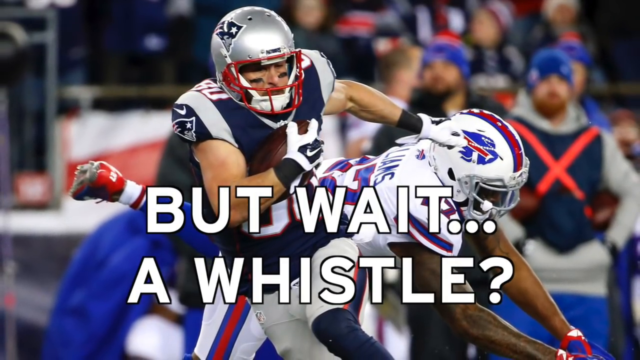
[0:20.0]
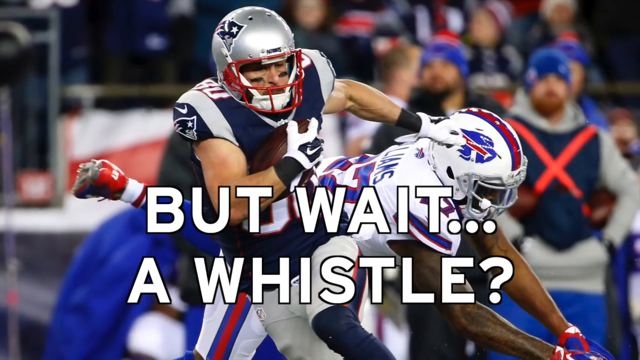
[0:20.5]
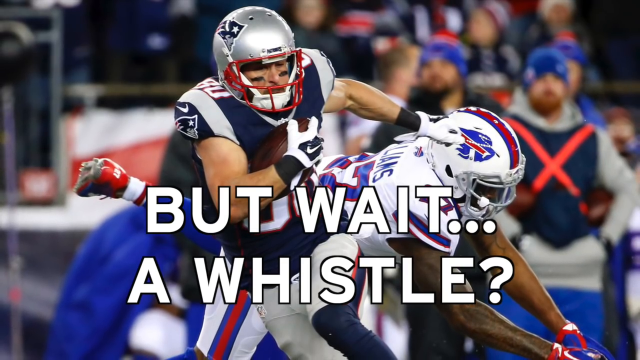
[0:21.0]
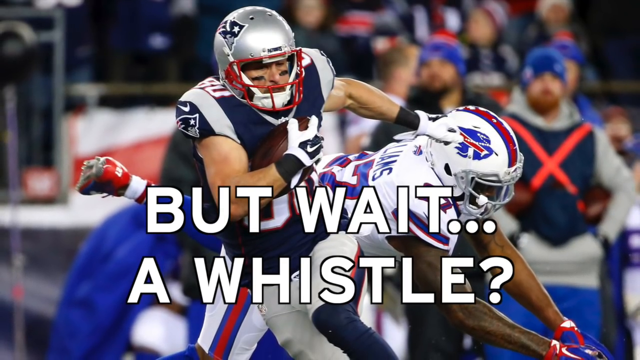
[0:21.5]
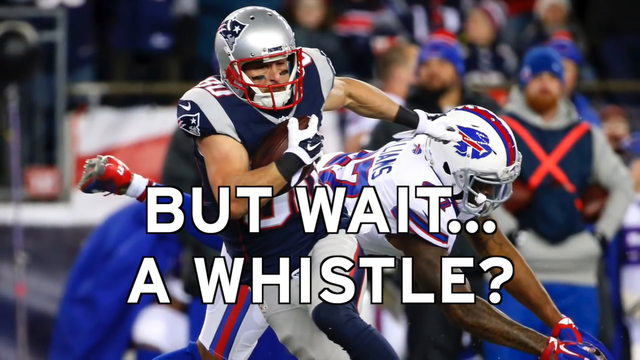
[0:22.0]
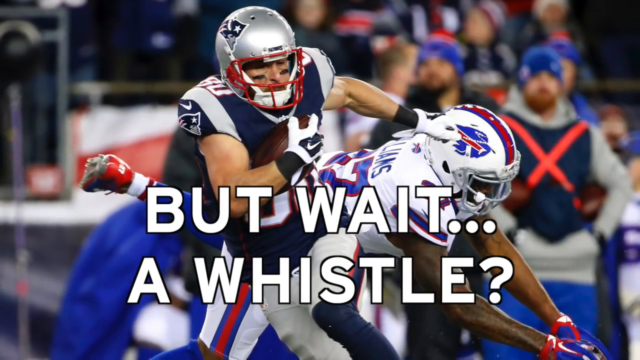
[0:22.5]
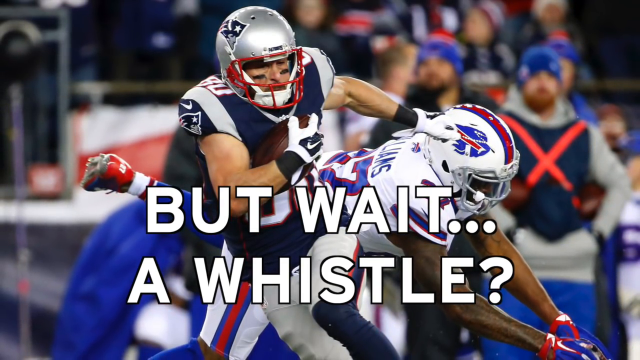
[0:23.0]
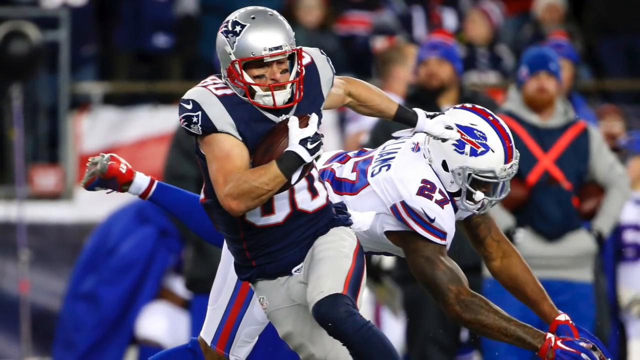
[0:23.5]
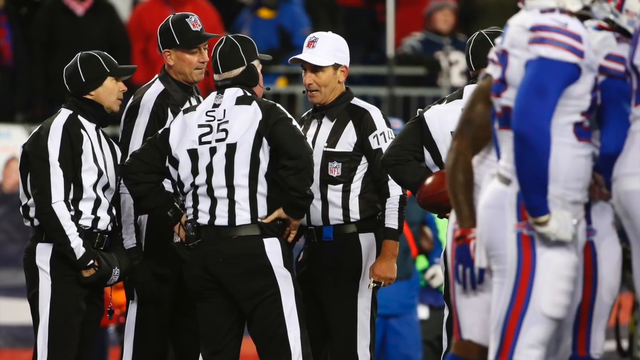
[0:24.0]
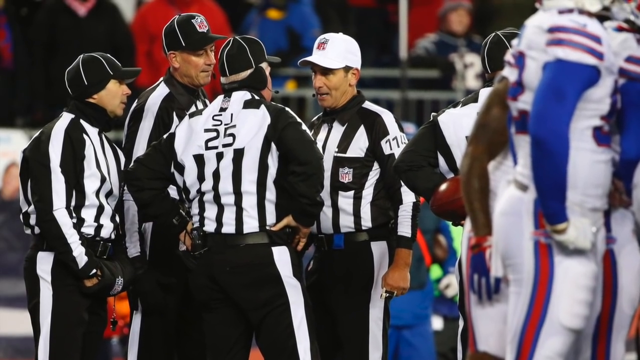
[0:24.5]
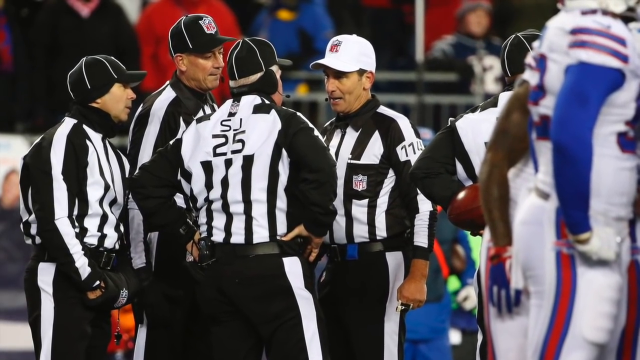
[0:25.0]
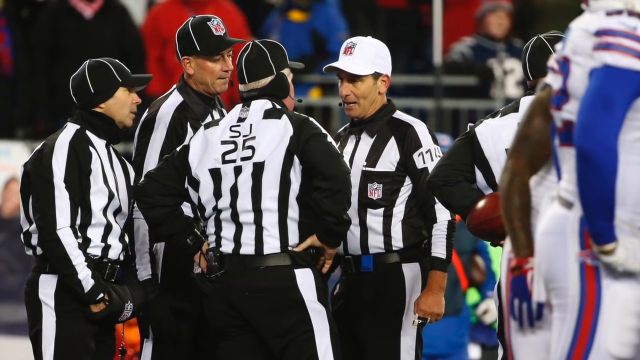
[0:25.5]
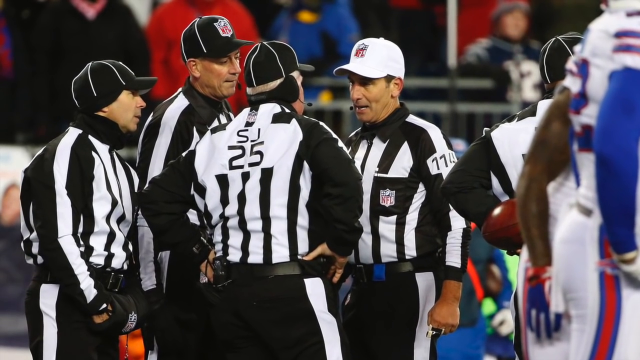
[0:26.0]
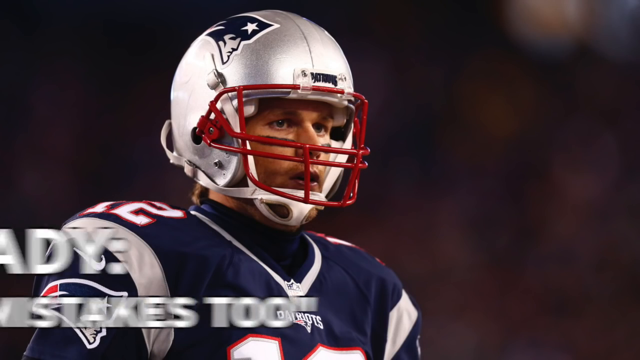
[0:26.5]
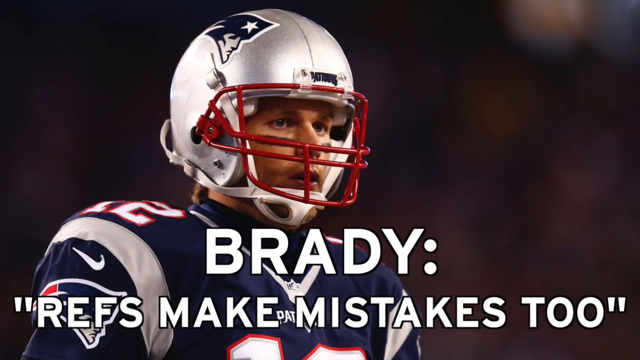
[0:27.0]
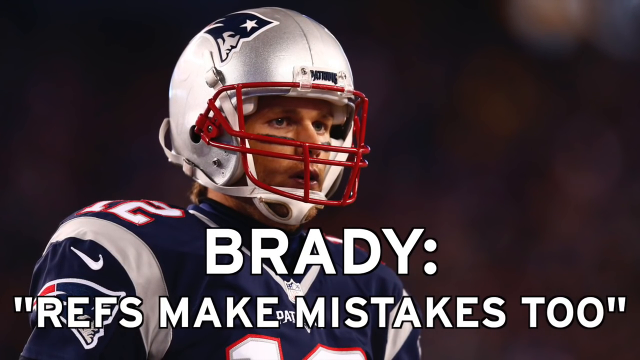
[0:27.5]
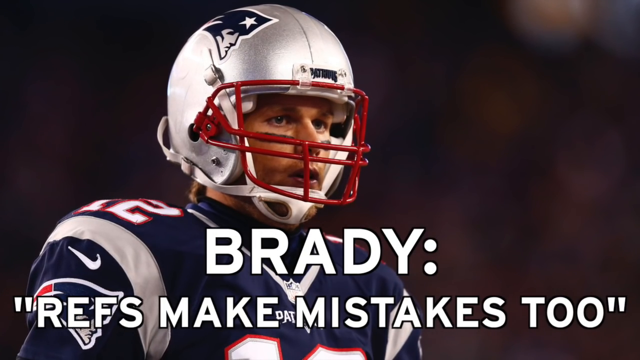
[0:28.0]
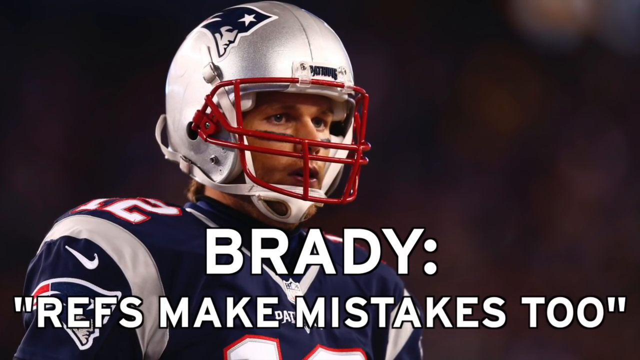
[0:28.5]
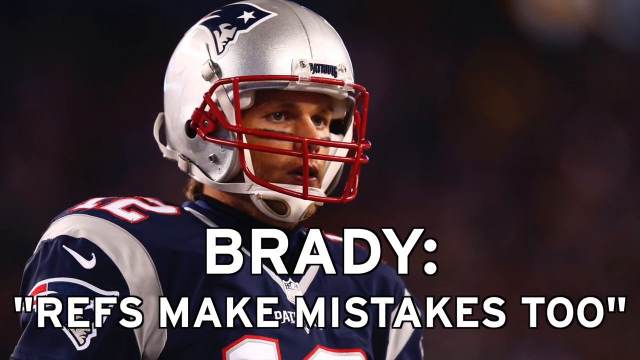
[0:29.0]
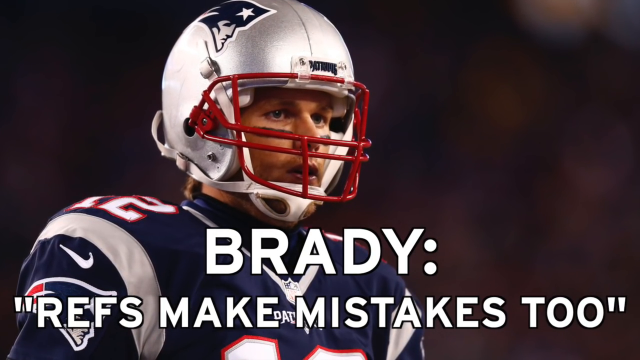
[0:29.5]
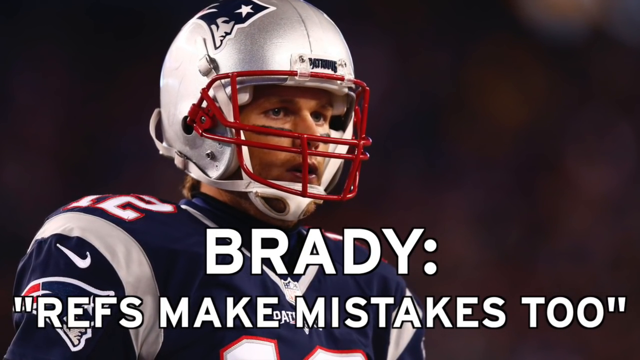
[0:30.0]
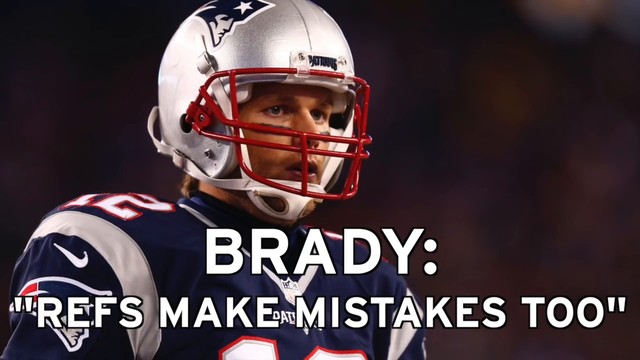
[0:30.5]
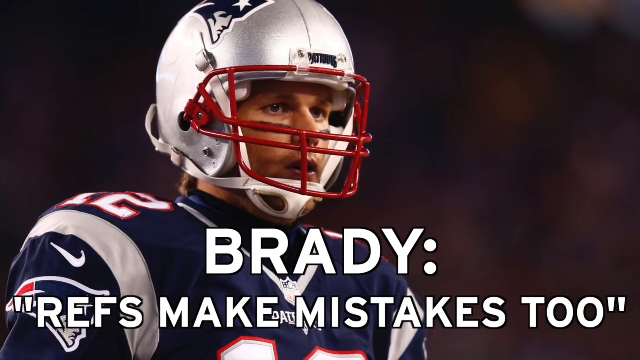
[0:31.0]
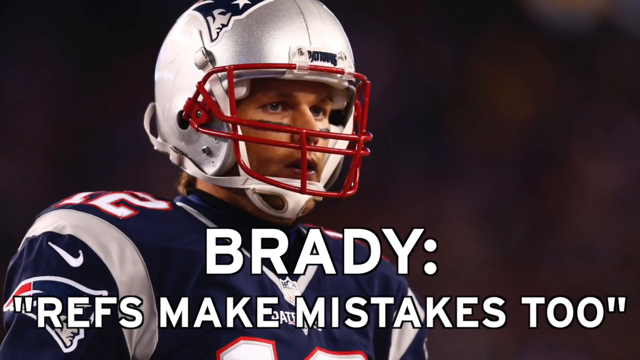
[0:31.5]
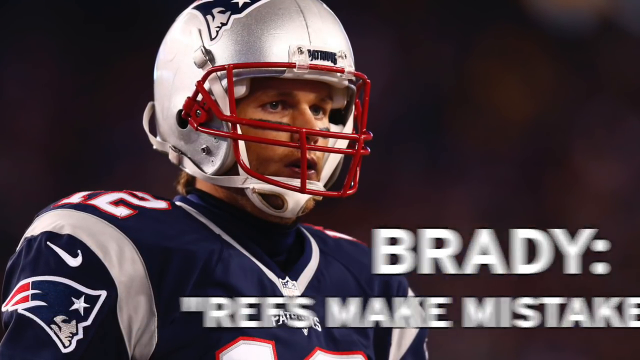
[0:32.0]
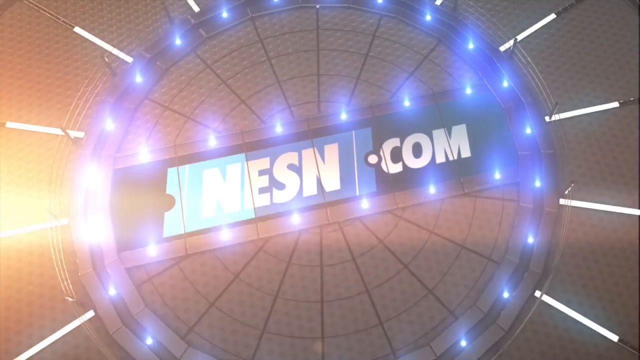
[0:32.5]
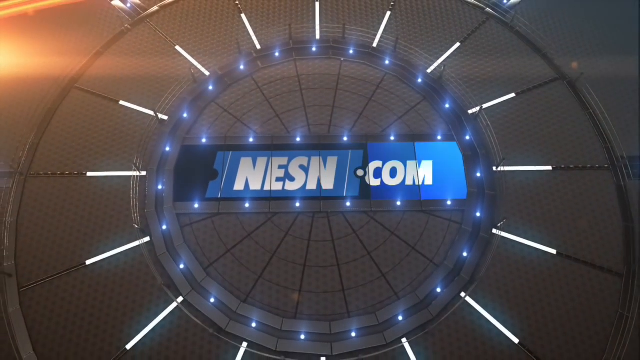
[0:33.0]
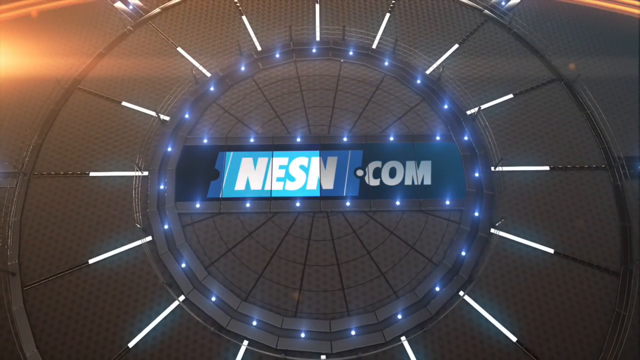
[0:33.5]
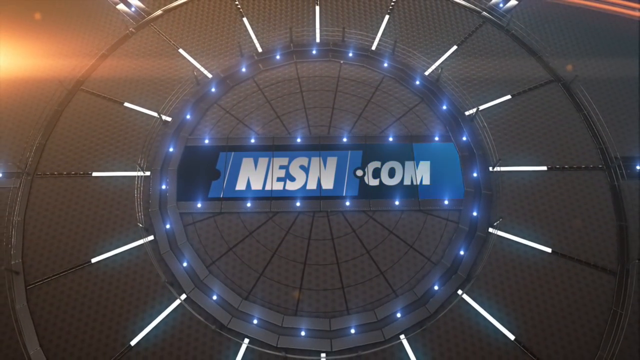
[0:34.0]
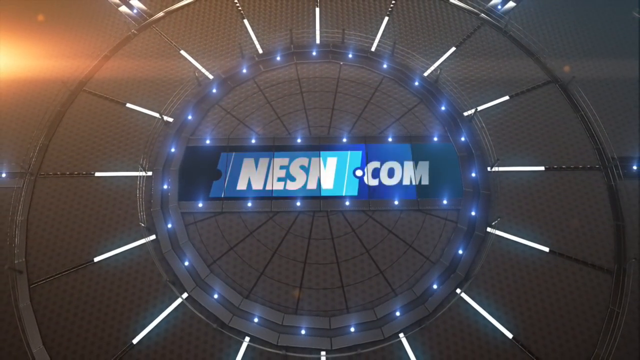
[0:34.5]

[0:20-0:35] There appear to be many referees, seemingly making decisions. Everyone looks serious about the game, and the referees are talking about something.